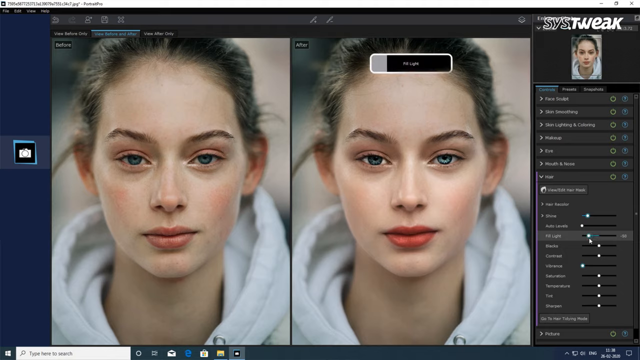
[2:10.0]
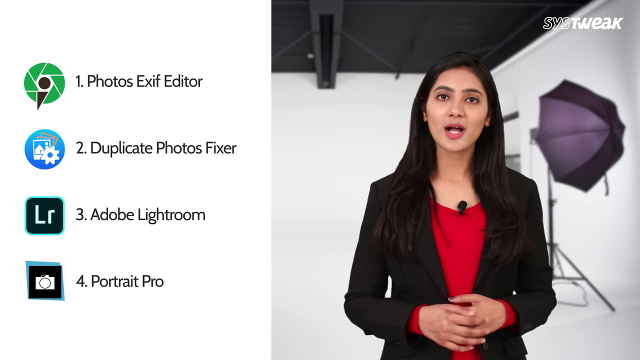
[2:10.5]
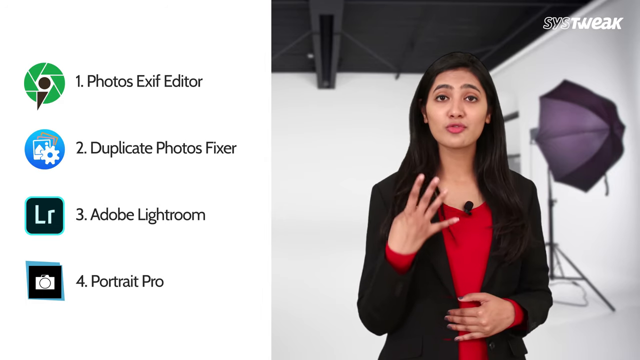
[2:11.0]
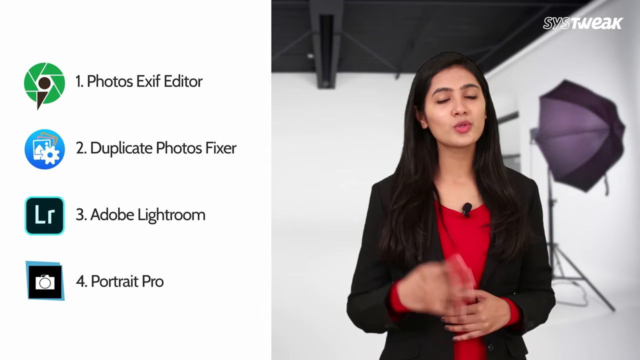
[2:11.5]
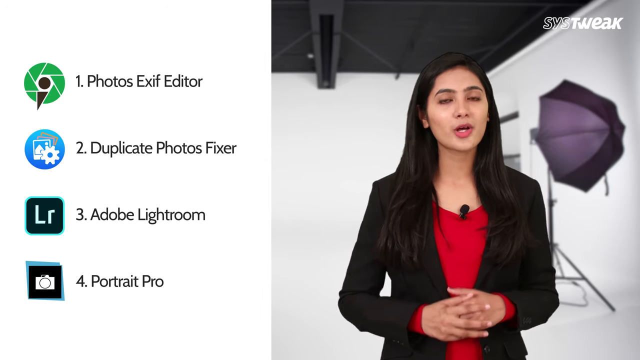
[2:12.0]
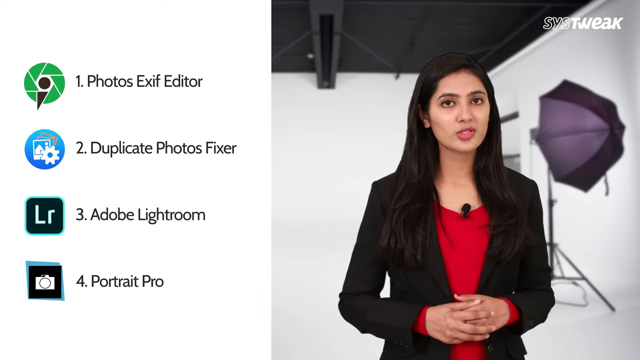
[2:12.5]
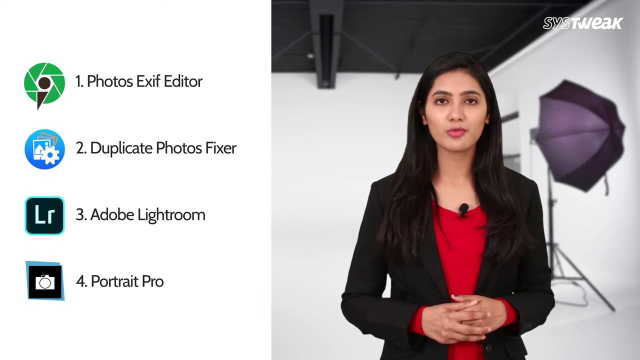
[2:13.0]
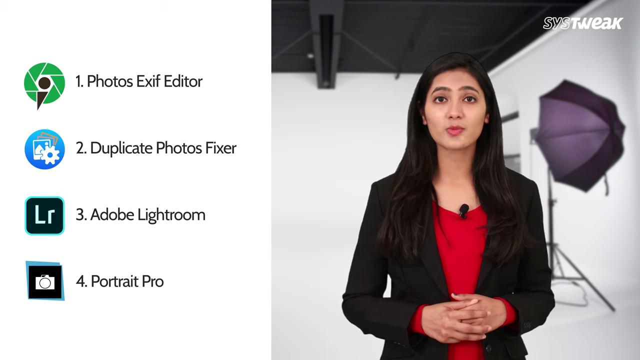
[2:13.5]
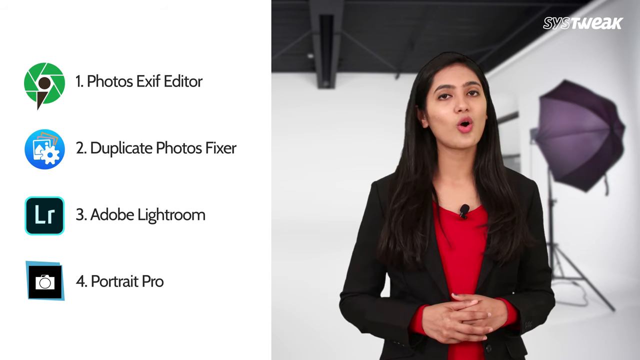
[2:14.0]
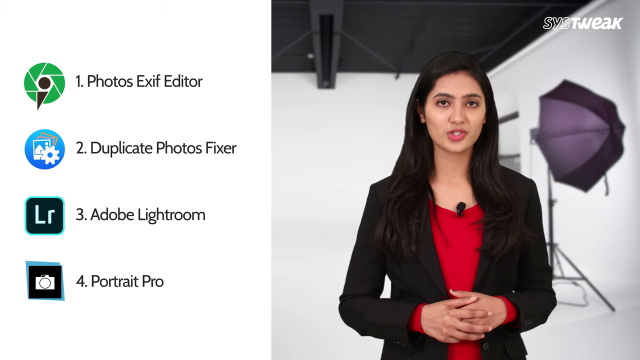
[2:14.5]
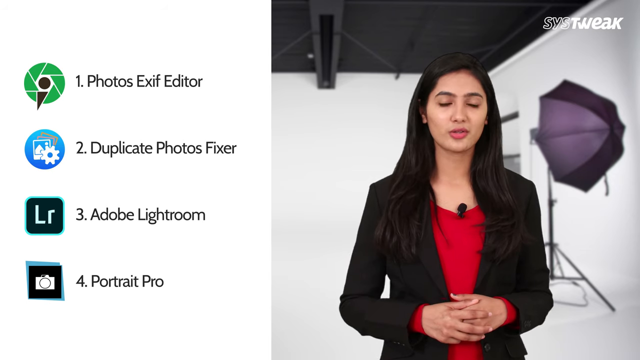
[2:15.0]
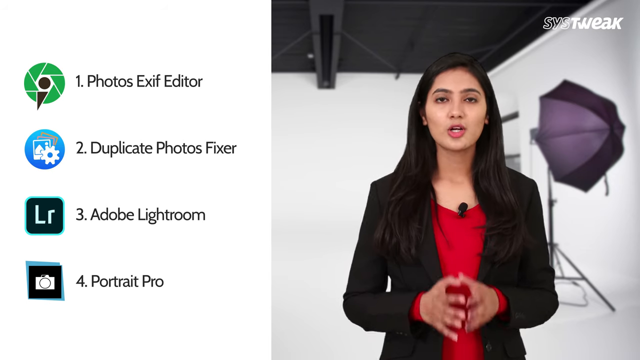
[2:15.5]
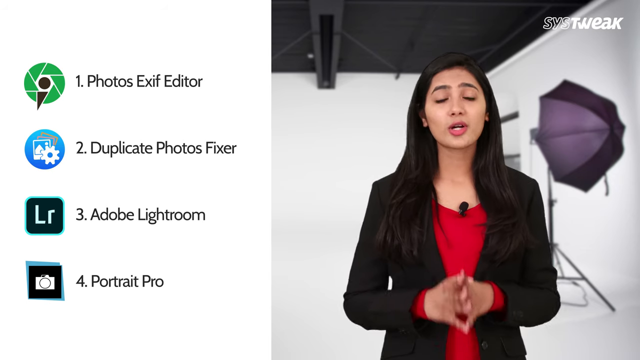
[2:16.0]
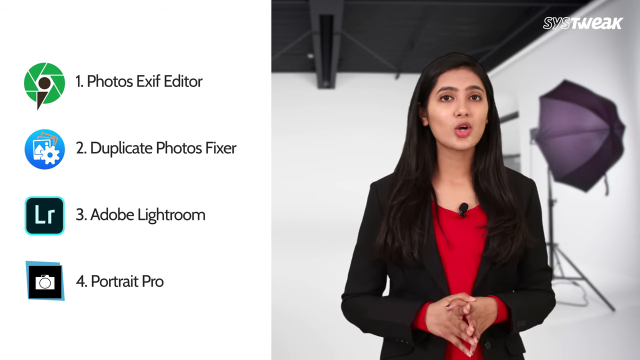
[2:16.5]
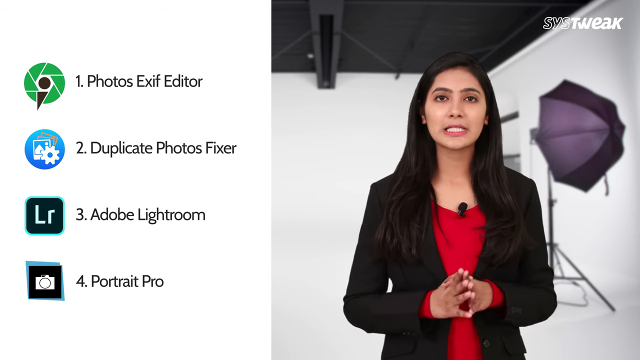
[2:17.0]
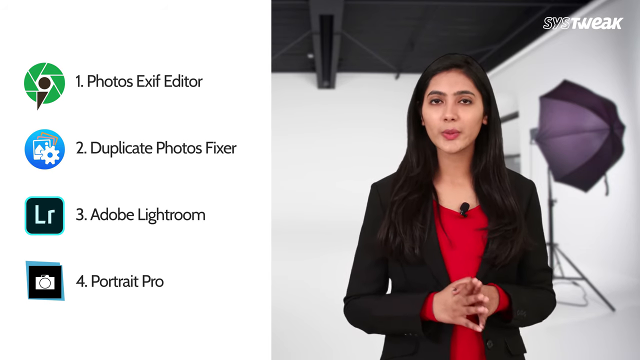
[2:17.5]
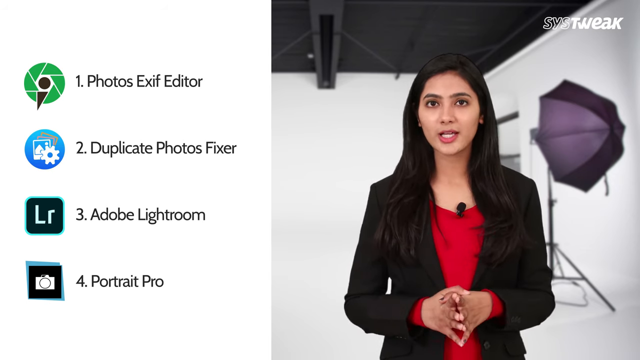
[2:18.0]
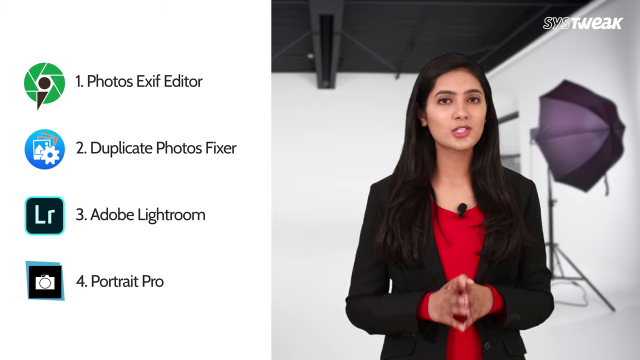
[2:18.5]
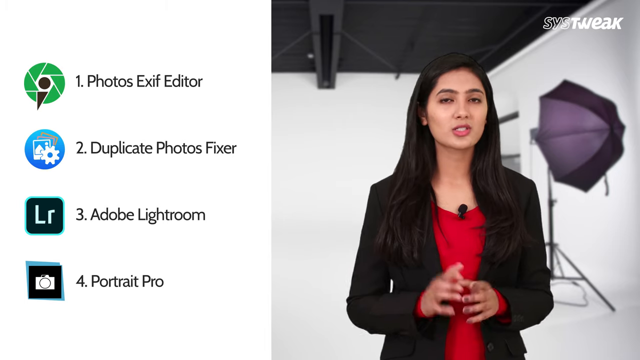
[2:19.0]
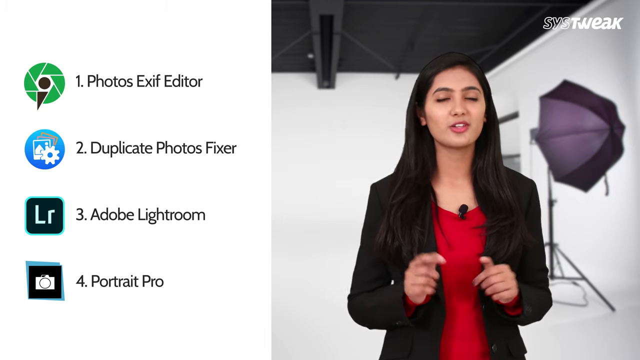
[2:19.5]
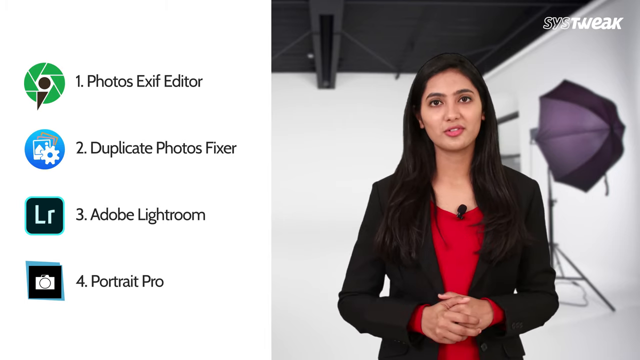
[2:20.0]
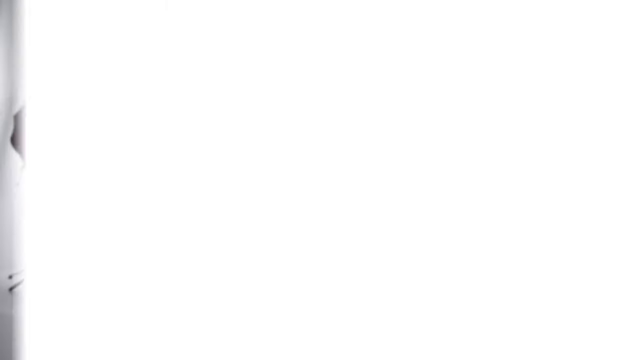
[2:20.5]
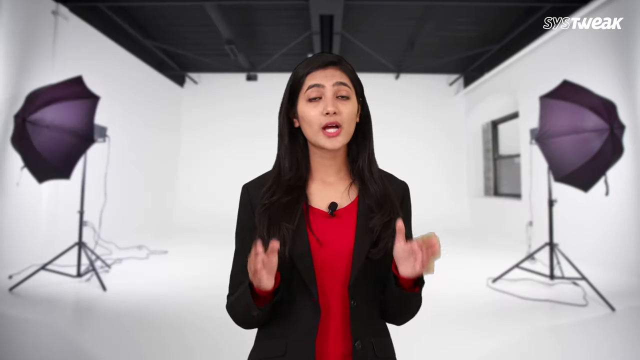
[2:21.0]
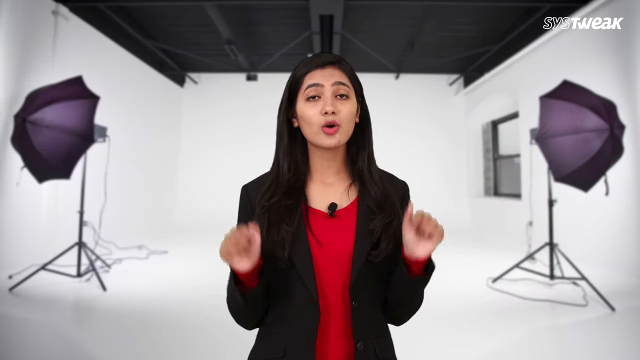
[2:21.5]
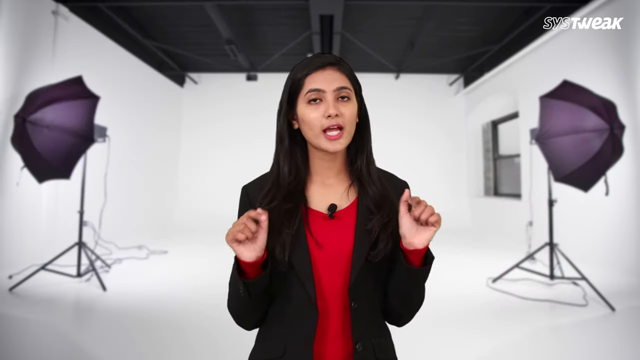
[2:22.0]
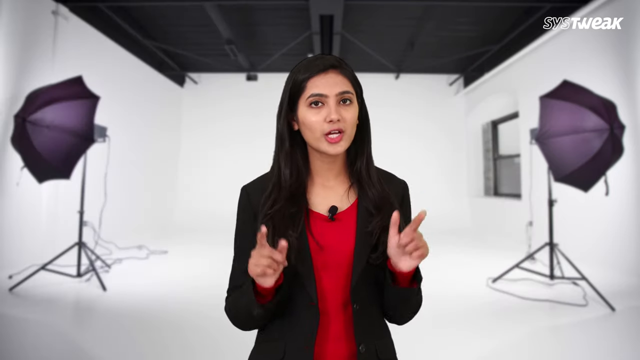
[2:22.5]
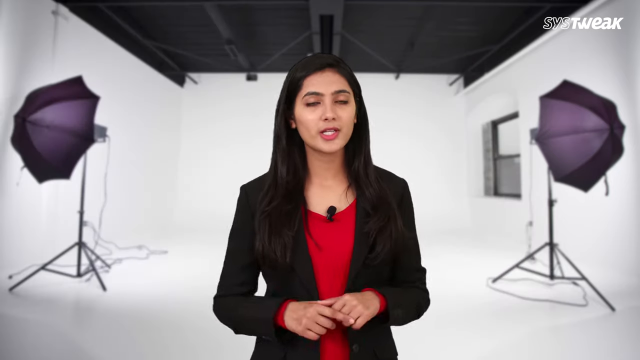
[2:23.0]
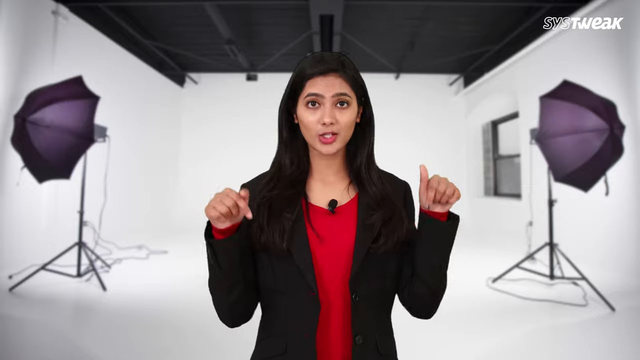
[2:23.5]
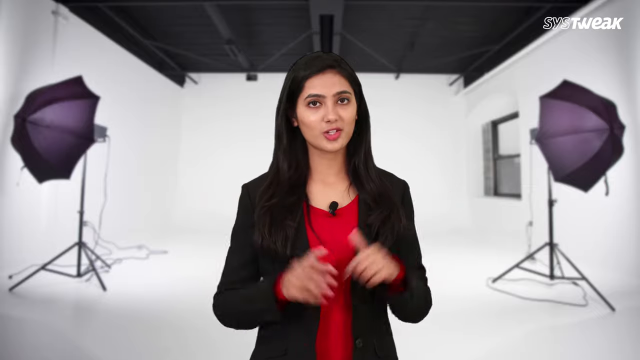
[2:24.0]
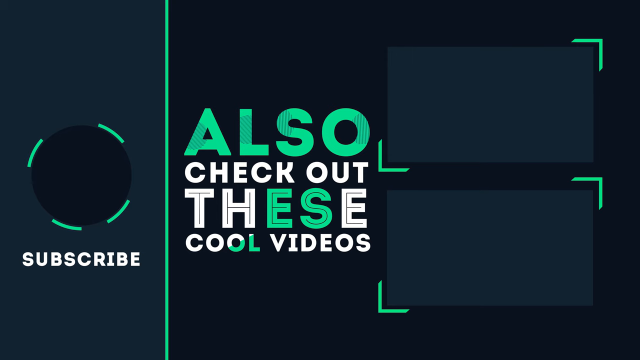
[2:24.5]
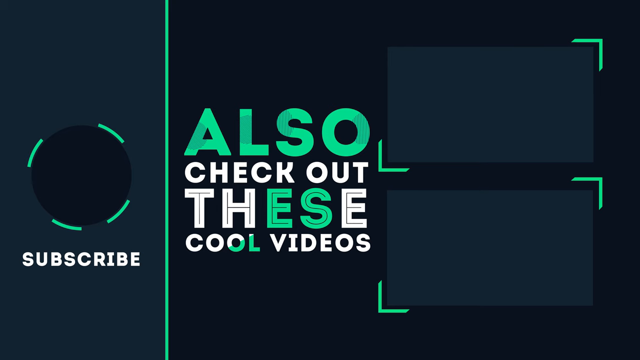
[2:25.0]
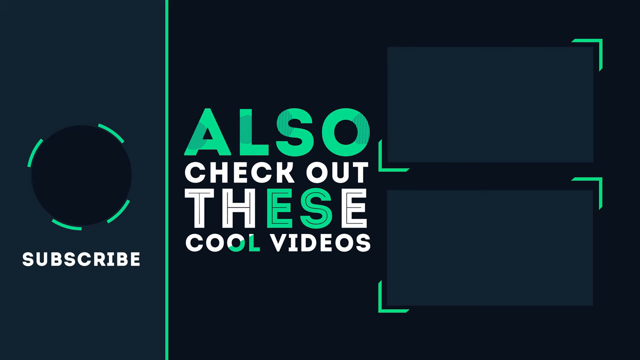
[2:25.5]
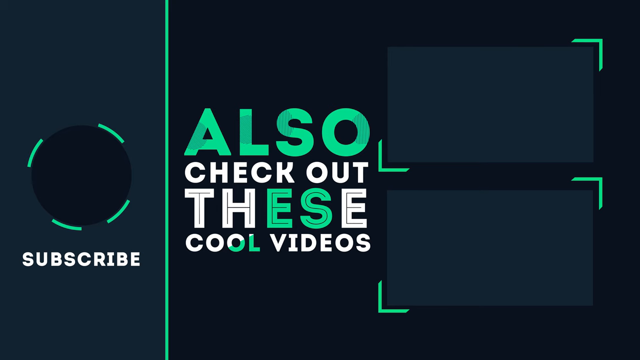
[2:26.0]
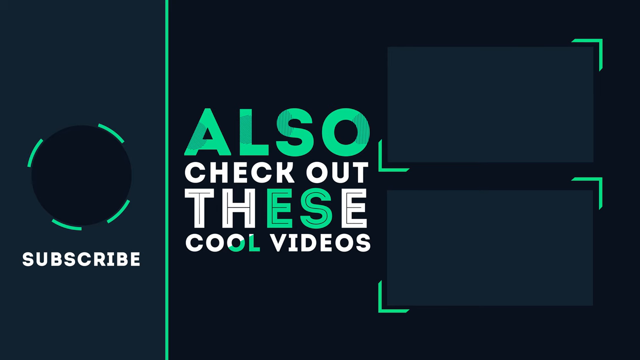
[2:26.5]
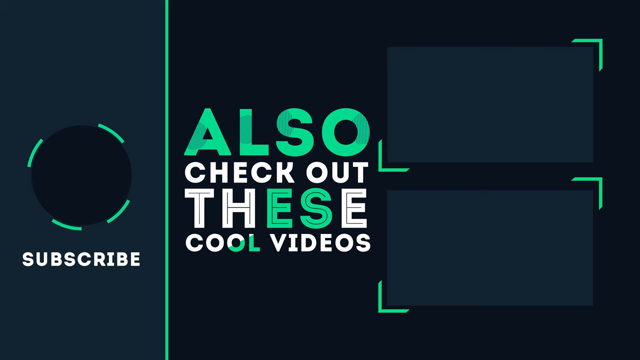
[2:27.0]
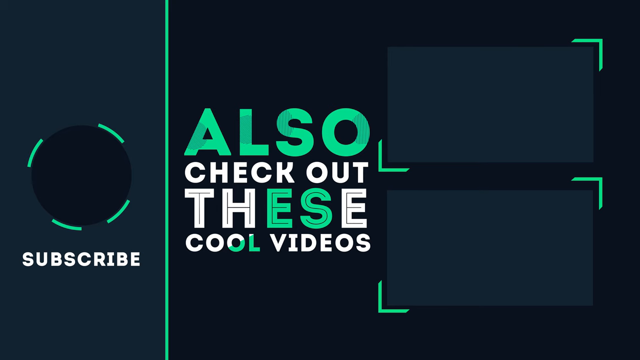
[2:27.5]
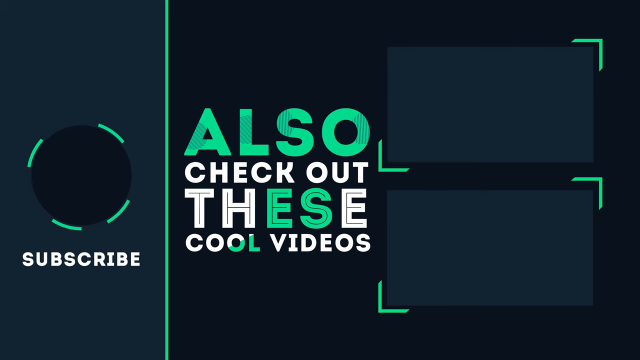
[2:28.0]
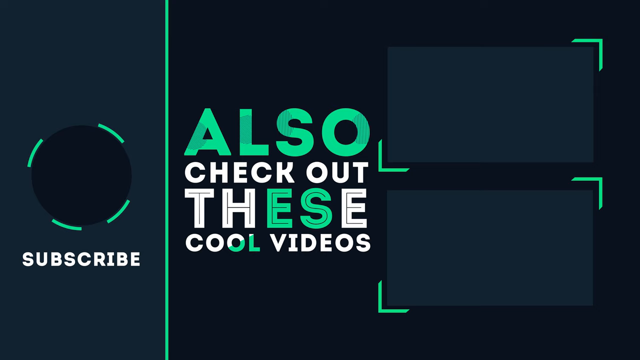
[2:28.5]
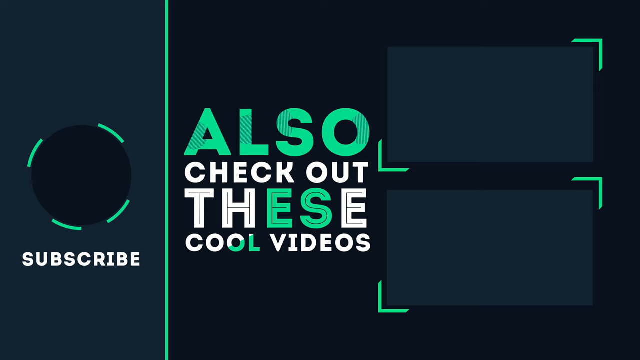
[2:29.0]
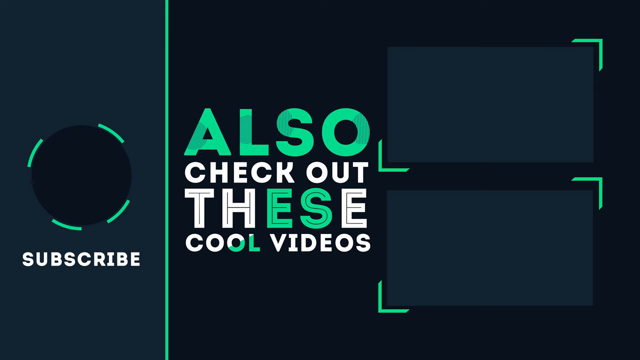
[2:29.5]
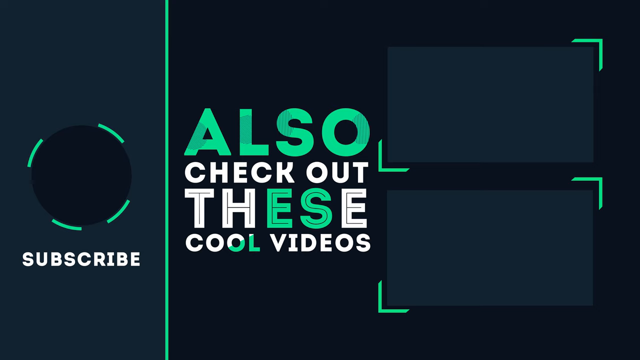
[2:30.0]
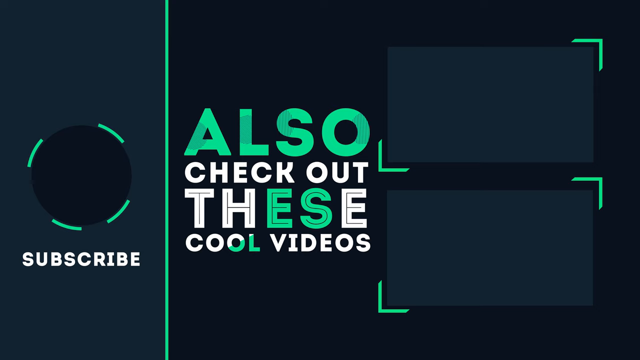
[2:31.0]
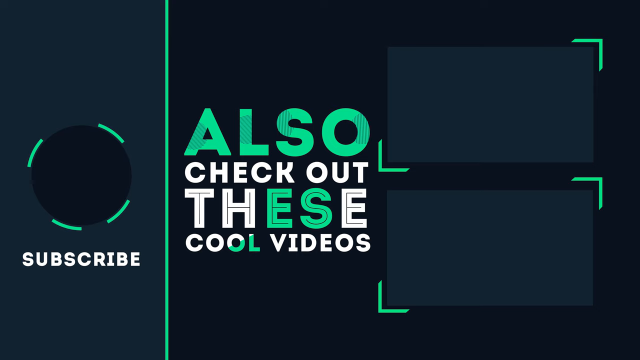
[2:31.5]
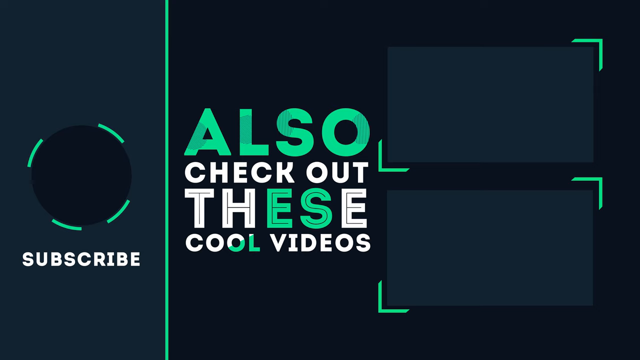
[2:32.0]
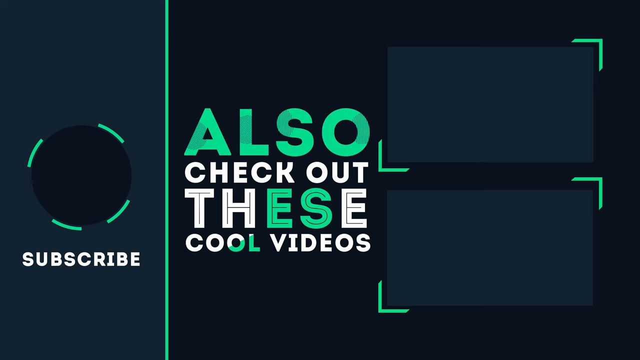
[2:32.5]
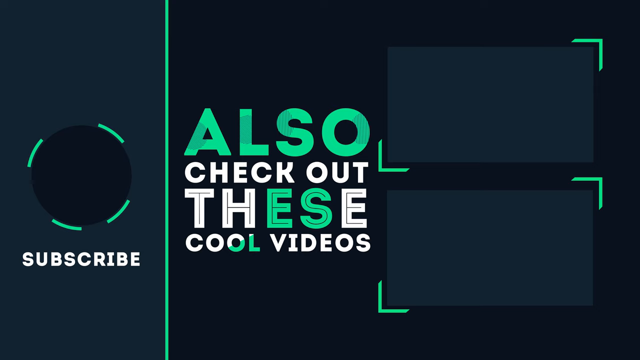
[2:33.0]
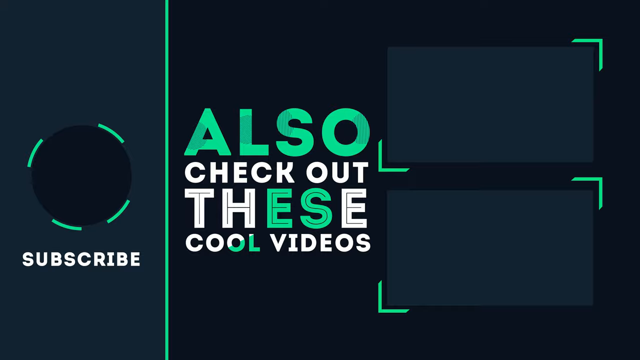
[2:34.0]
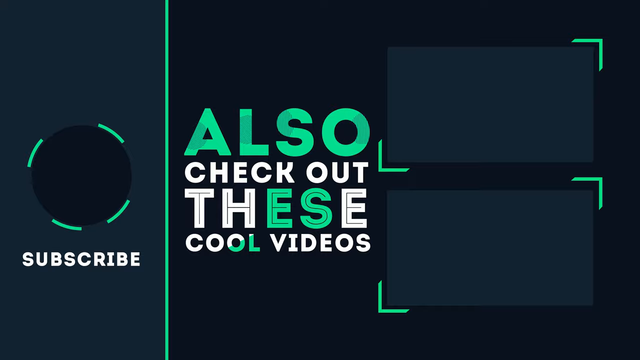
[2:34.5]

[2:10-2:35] The woman in the black and red outfit speaks into the camera. She begins with four fingers up and makes various gestures as she speaks. To her left is a list of four items: Photos Exif Editor, Duplicate Photos Fixer, Adobe Lightroom and Portrait Pro. She continues speaking with her hands crossed in front of her, then makes a gesture with both hands before the list disappears, leaving just the woman speaking into the camera. She then disappears, and a message appears that states "also check out these cool videos," with a subscribe button next to it. The message is in green and white on a dark navy blue background.